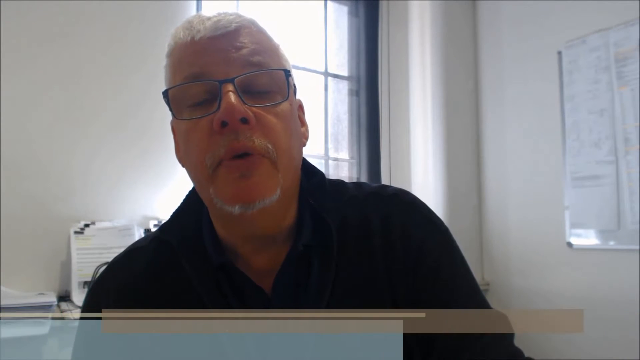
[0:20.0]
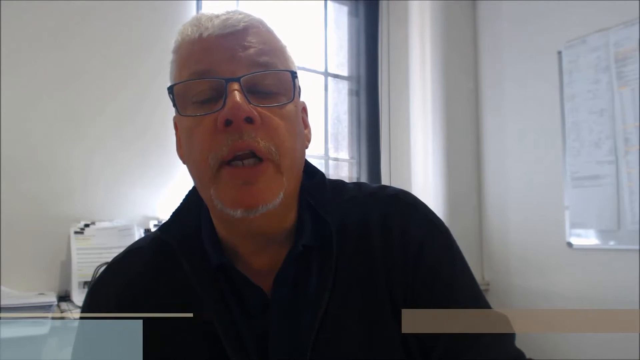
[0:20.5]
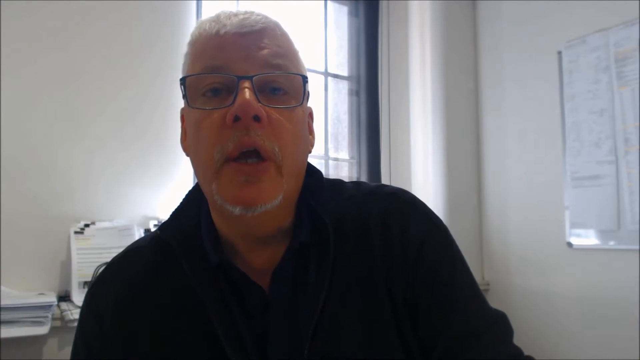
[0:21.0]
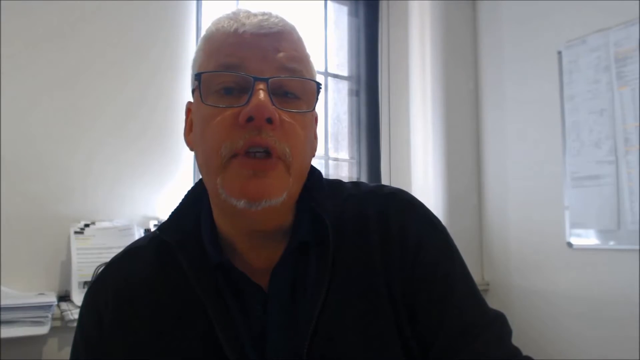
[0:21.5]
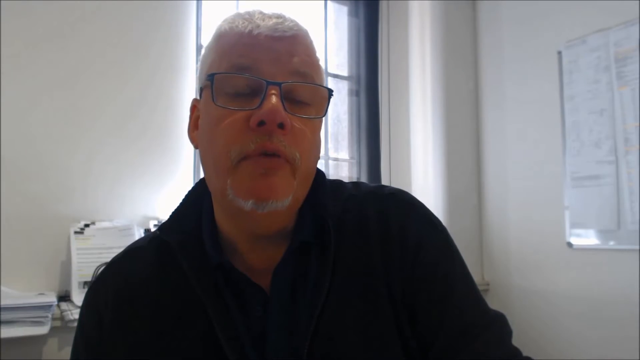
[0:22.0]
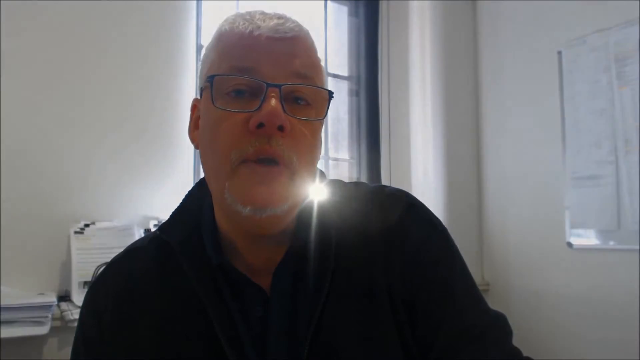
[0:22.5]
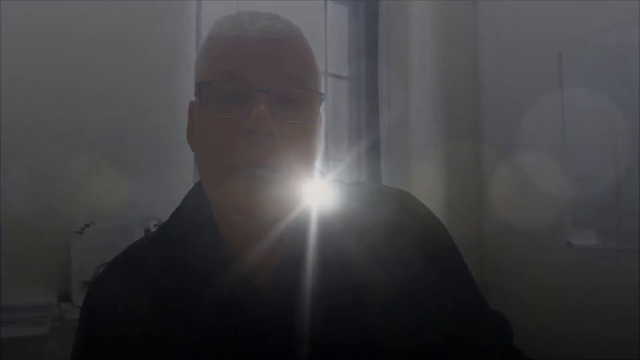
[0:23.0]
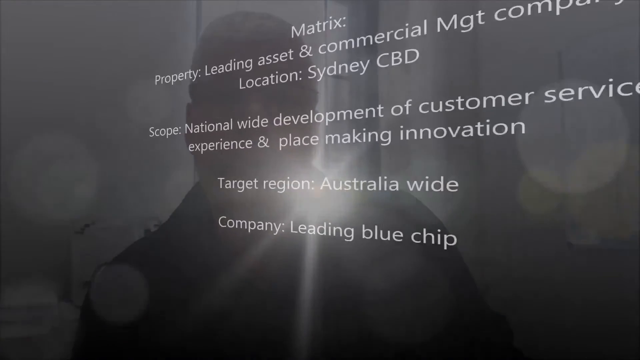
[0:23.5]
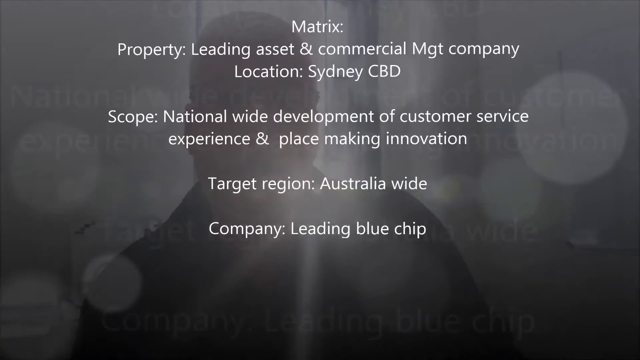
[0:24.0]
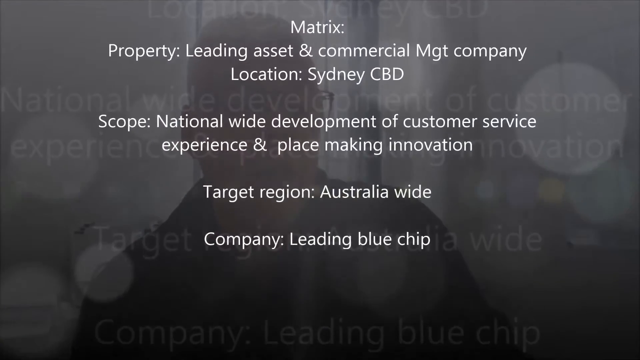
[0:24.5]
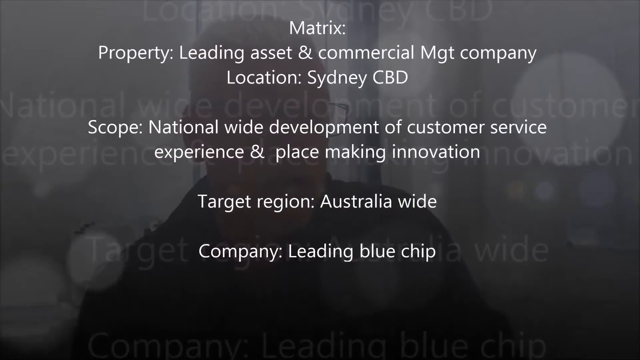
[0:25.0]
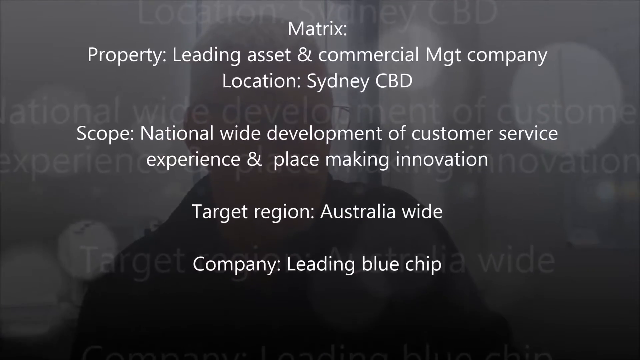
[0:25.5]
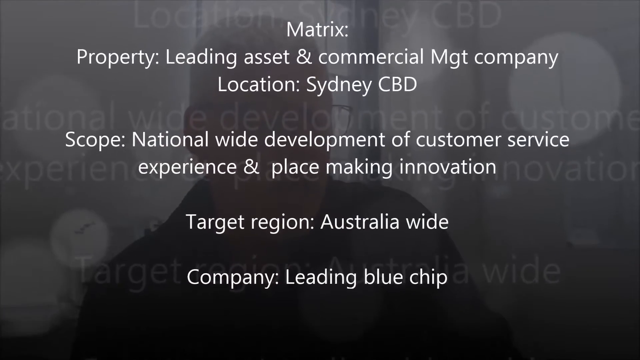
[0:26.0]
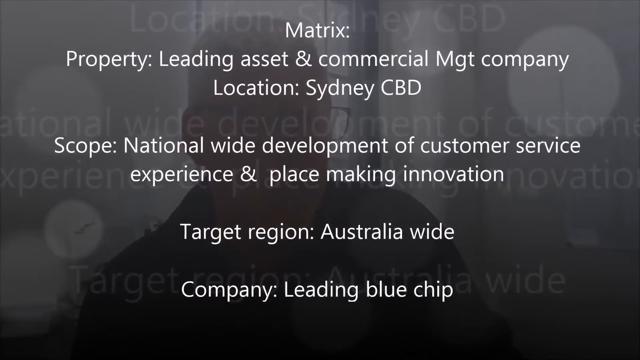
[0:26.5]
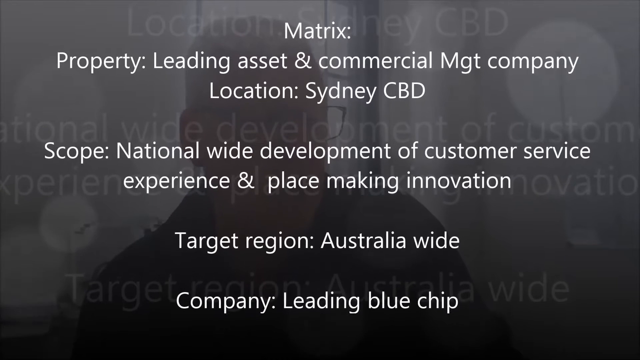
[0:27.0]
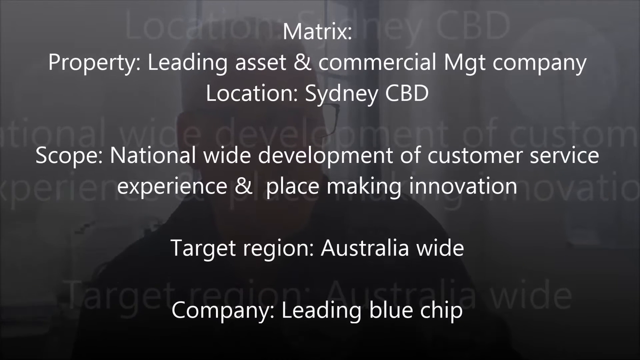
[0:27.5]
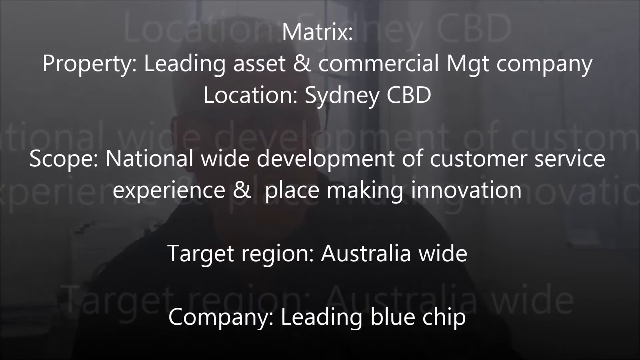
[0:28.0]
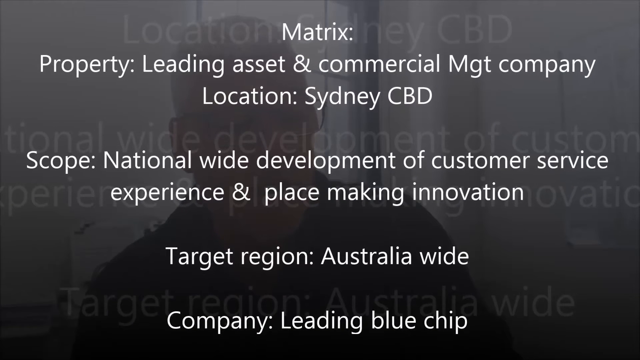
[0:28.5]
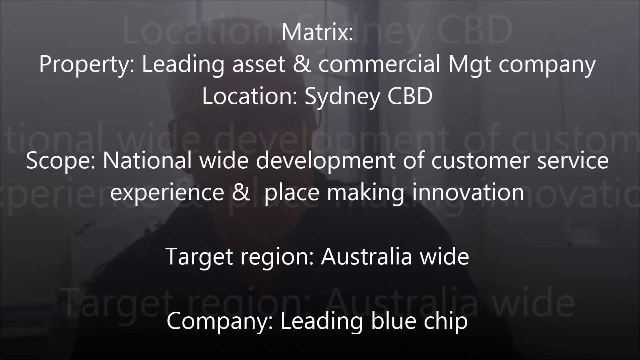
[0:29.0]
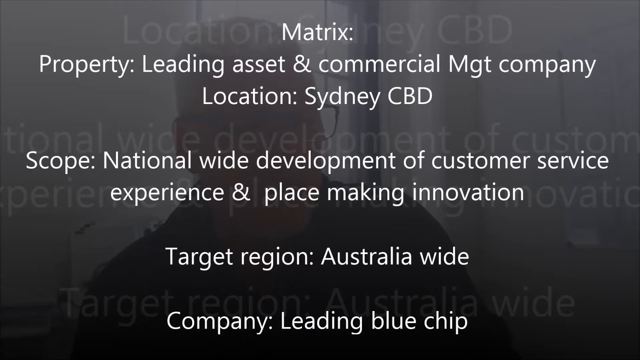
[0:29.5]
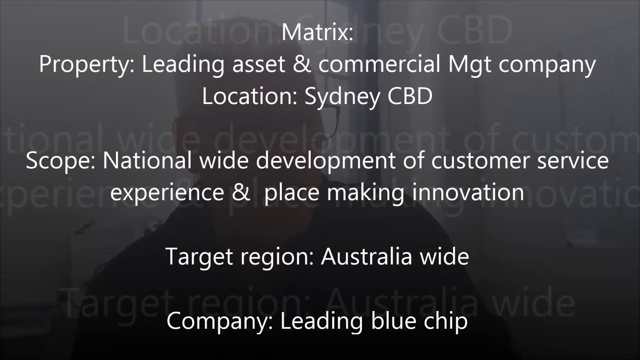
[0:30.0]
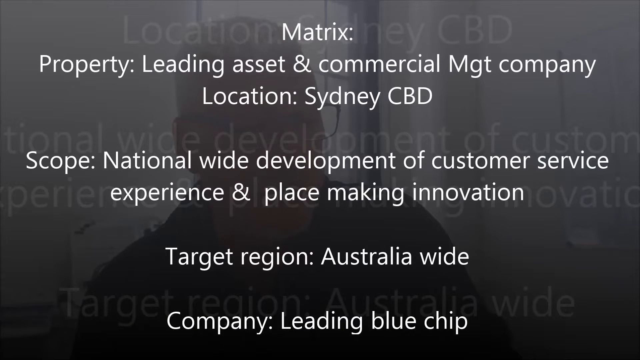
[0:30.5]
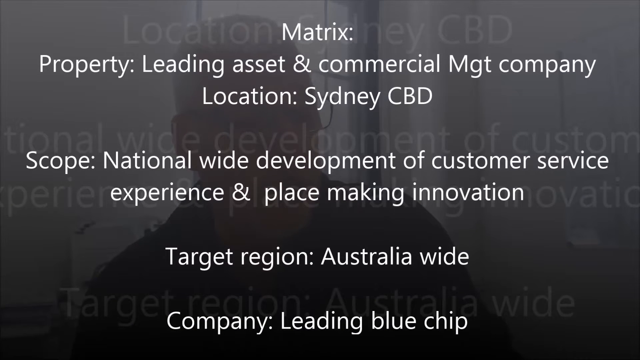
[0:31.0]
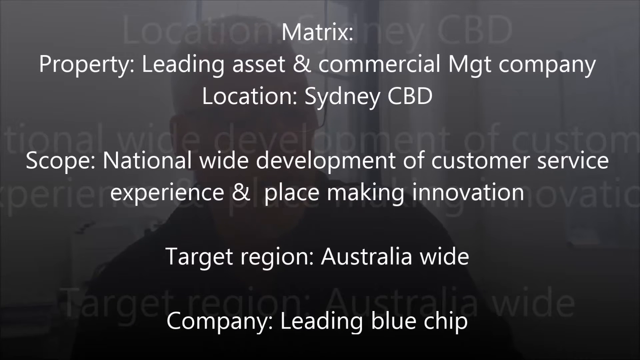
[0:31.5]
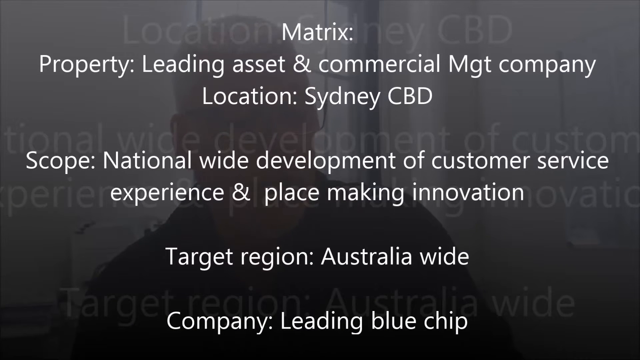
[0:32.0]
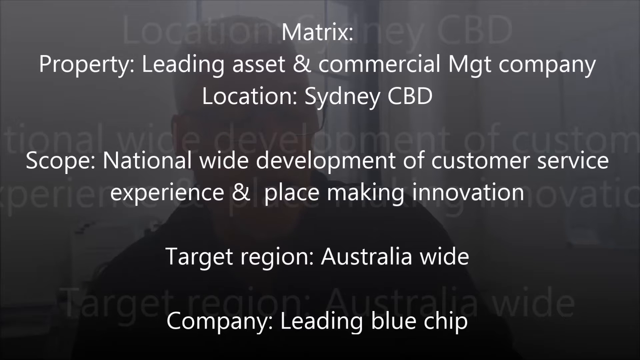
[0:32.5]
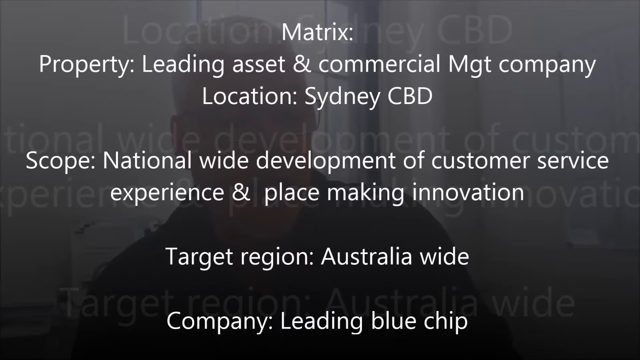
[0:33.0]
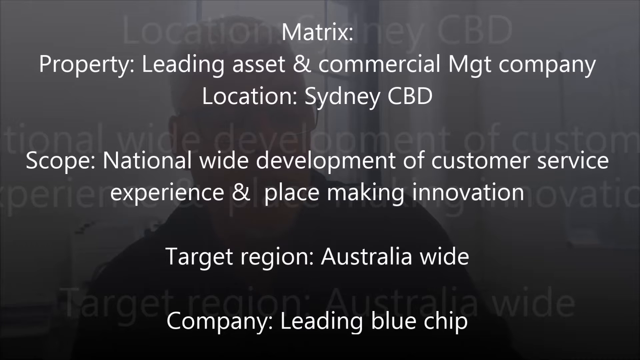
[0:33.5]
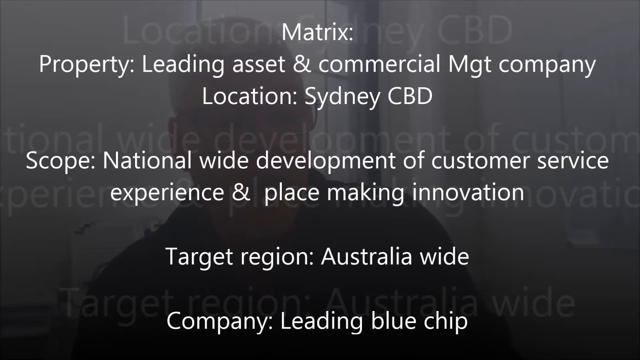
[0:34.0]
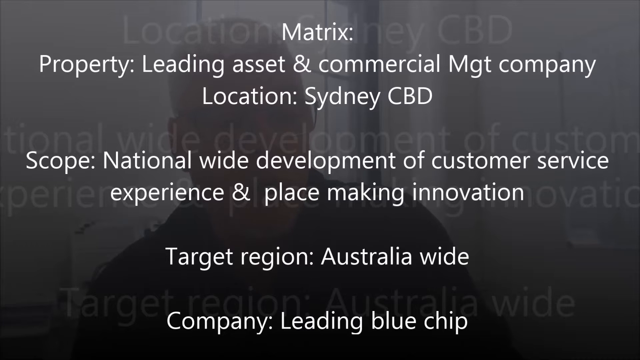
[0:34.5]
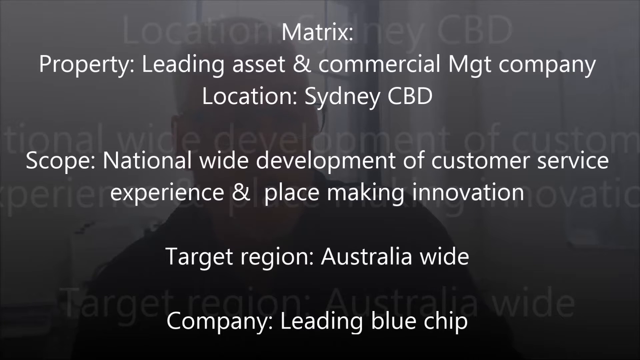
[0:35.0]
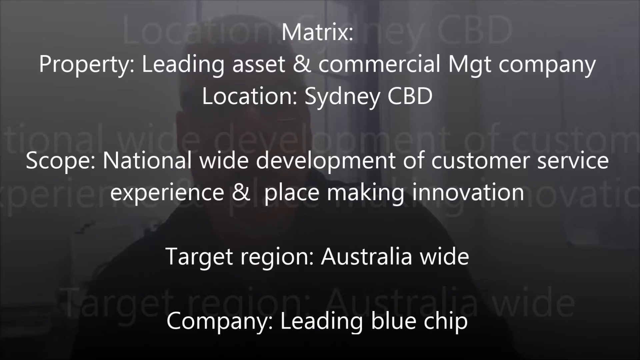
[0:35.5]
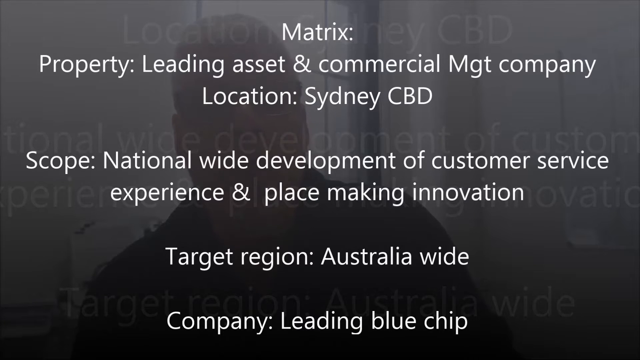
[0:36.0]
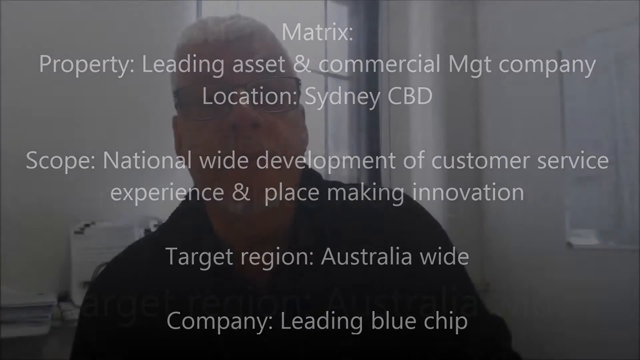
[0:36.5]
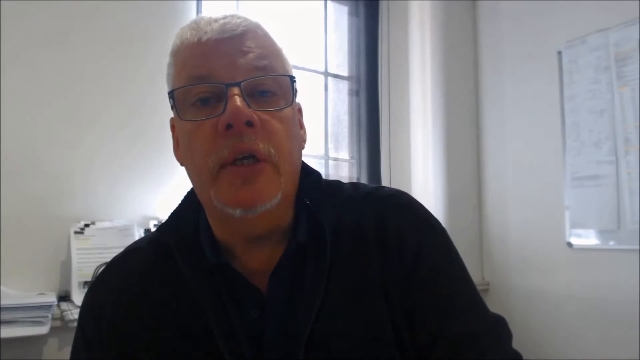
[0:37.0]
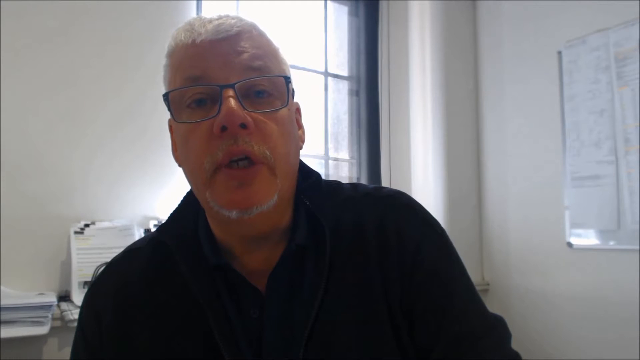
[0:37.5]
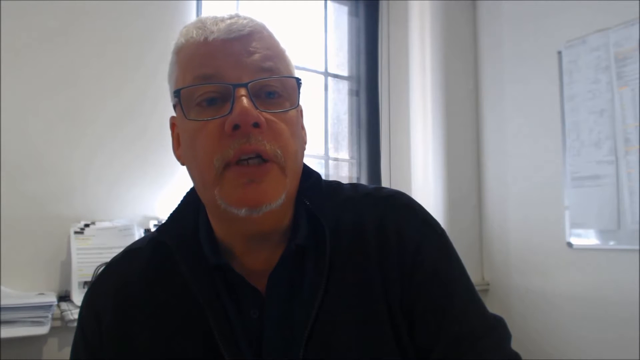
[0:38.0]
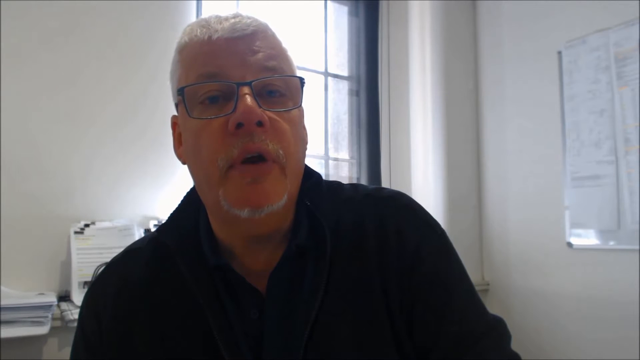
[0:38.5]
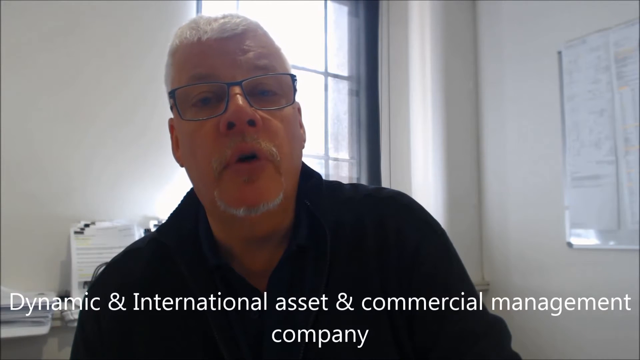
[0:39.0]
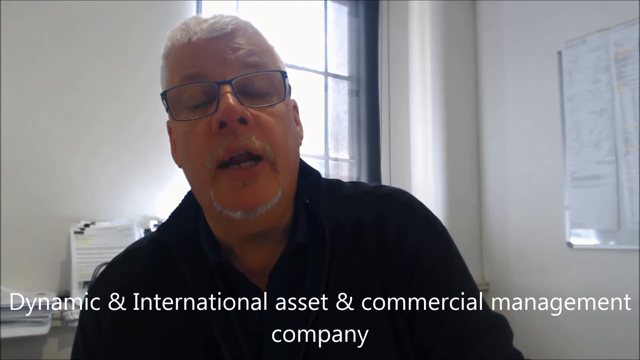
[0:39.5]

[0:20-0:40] The man continues talking, with a window and a whiteboard clearly visible in the background, and possibly some papers behind him. After a few seconds the video cuts to a black screen with white text that mentions something about management and also Australia. The text screen then disappears and the video returns to the man talking.